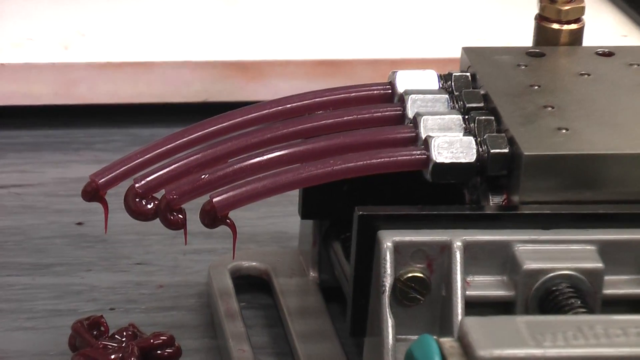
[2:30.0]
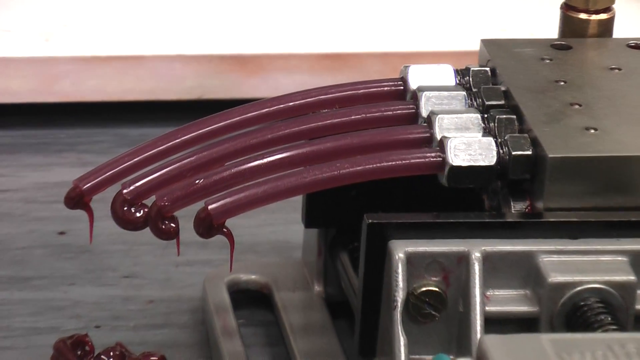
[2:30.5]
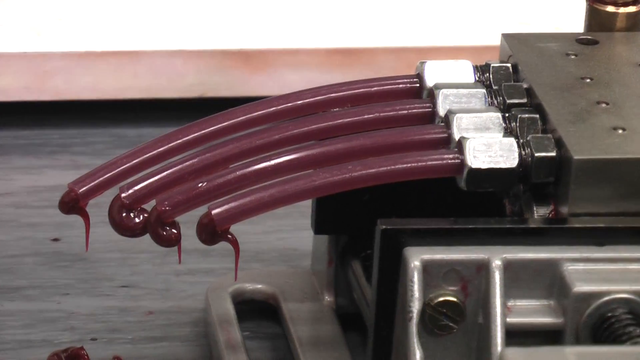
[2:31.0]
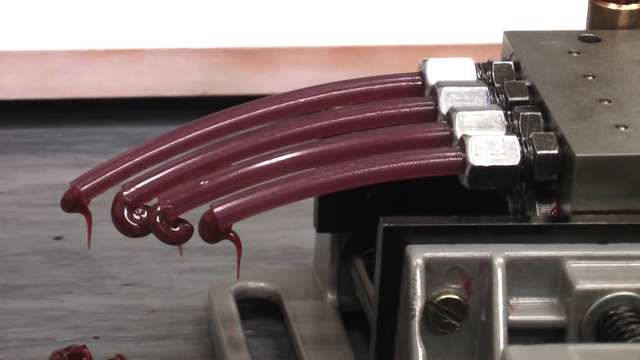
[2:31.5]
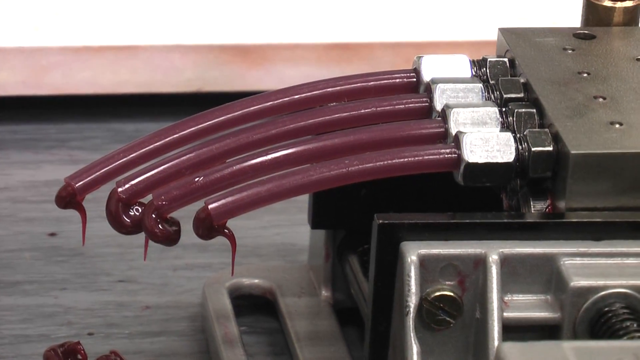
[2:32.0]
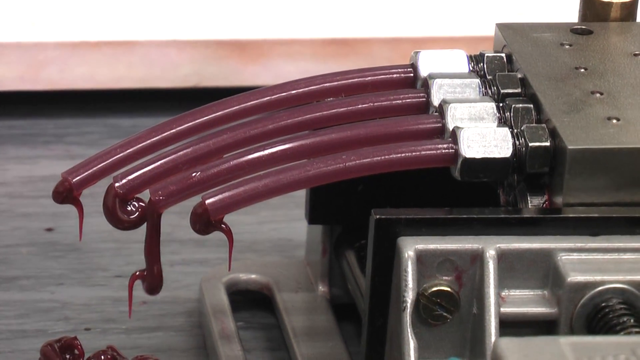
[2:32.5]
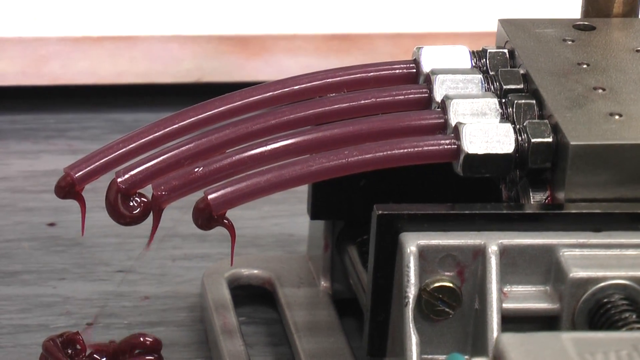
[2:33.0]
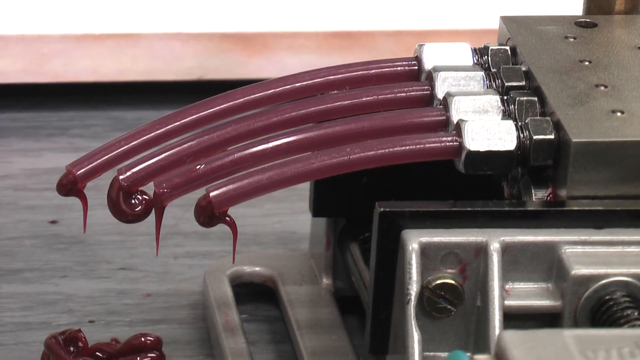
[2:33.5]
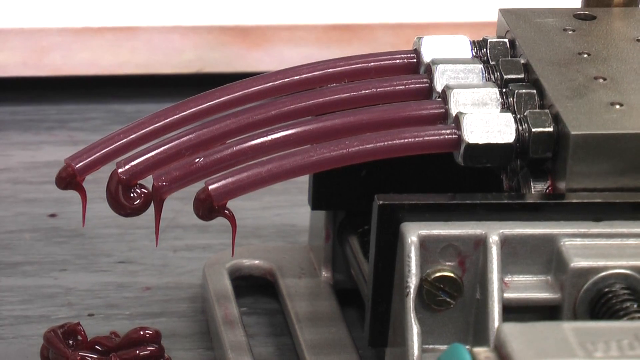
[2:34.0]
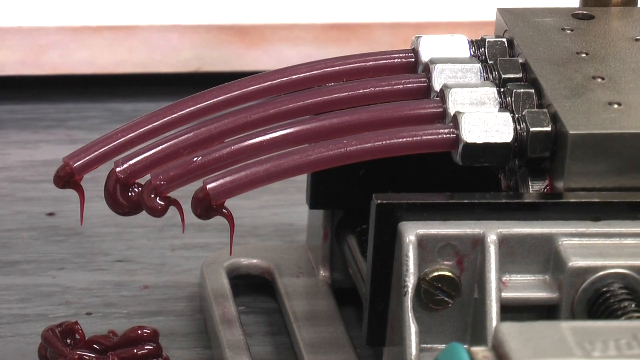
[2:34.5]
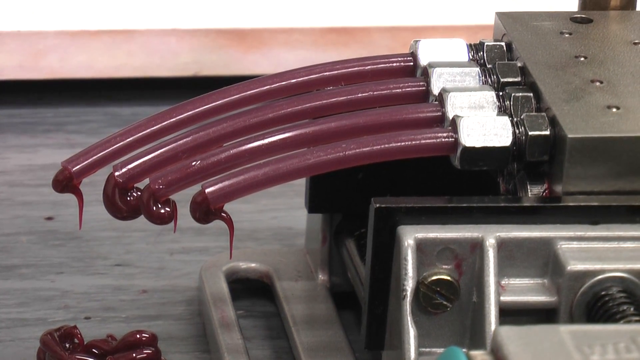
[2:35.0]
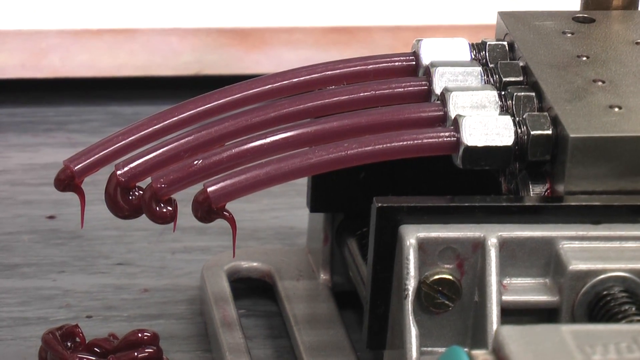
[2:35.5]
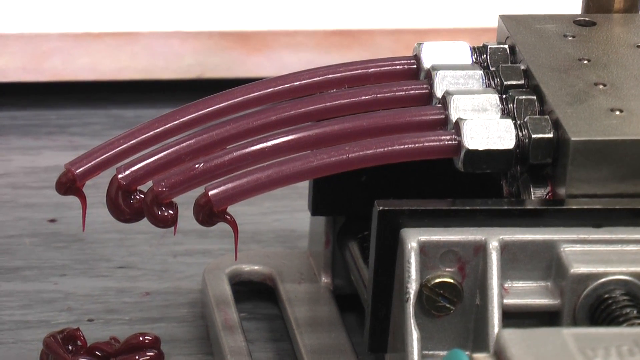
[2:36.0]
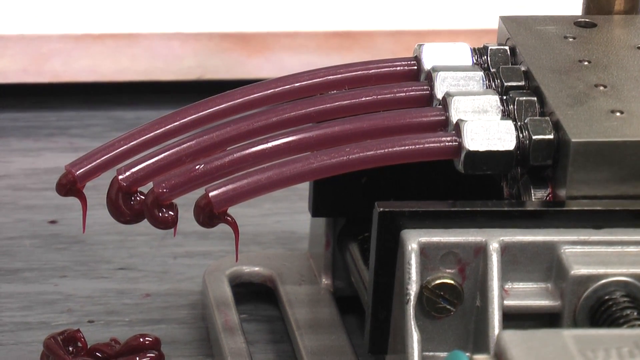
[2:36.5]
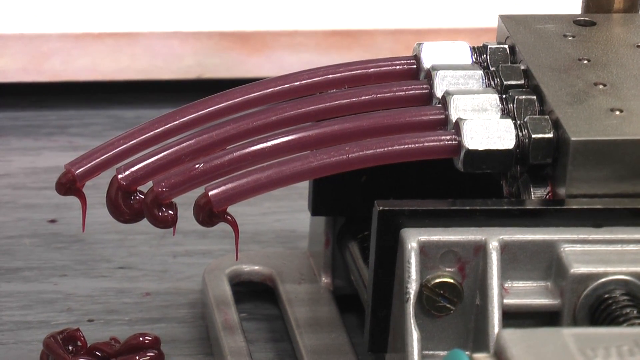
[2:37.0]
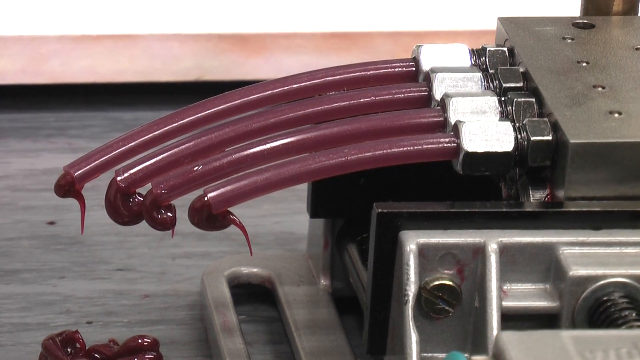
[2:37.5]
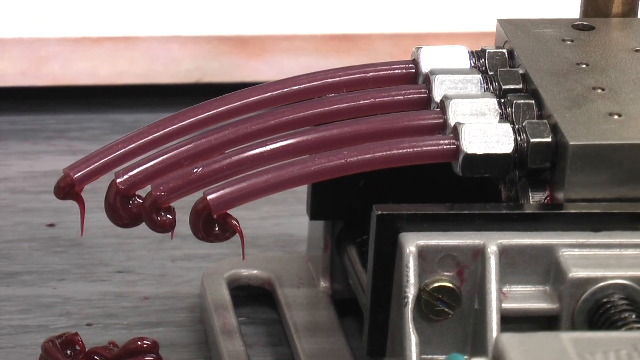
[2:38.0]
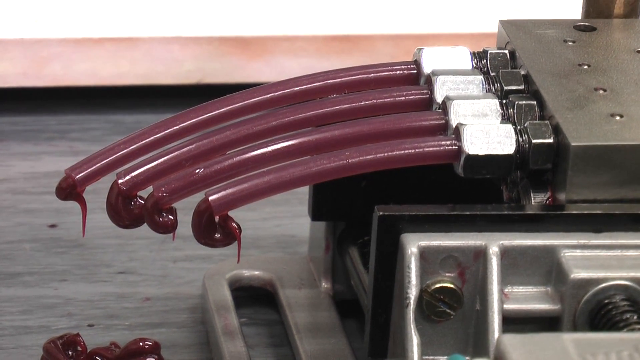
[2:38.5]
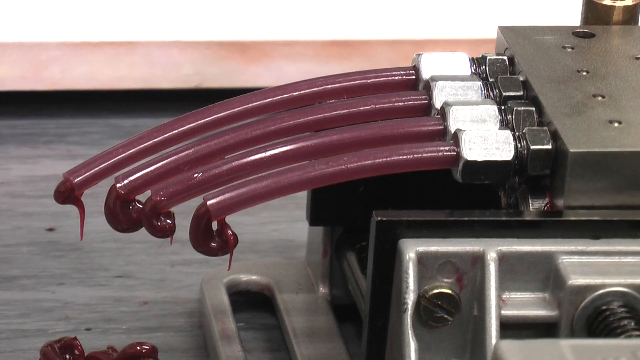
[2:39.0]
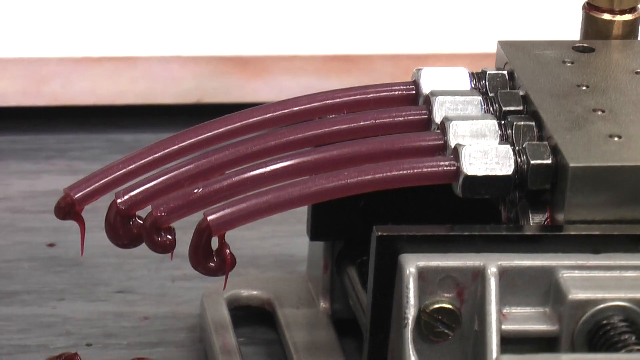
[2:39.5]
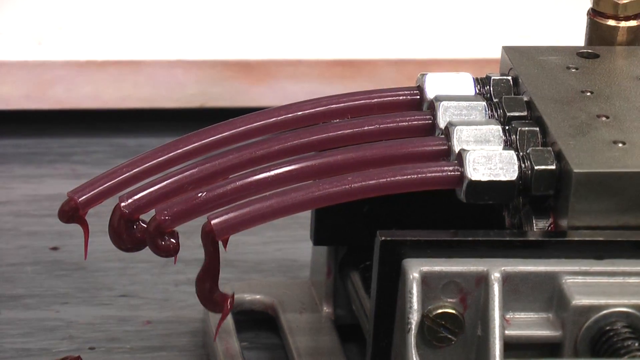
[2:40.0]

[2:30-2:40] About four little tubes are squirting out an unidentified substance that looks like jelly, syrup or frosting, a kind of purple ooze.